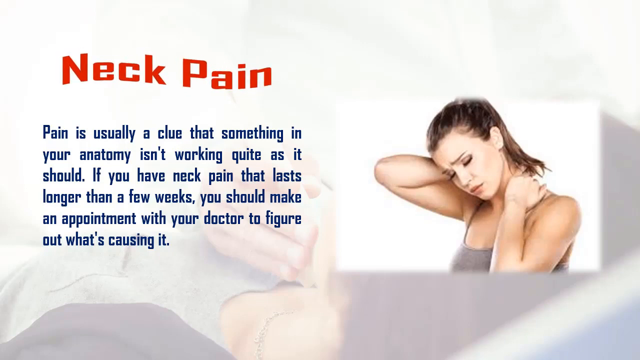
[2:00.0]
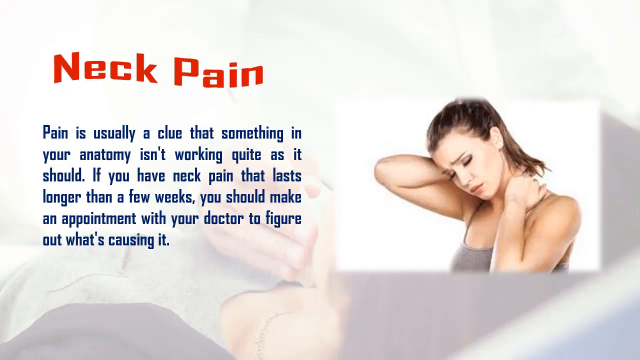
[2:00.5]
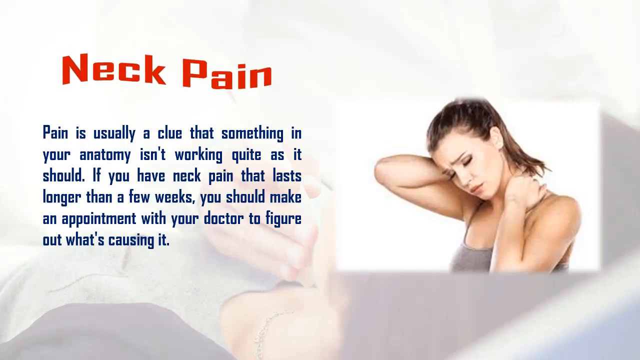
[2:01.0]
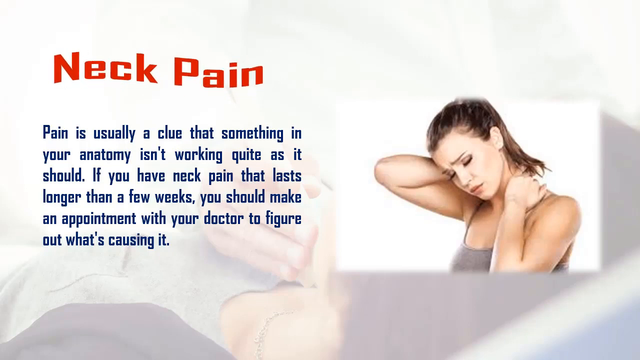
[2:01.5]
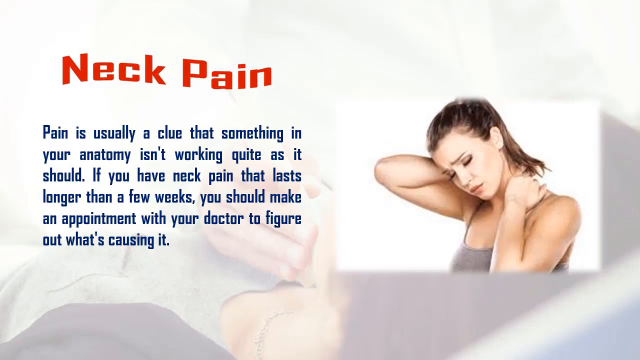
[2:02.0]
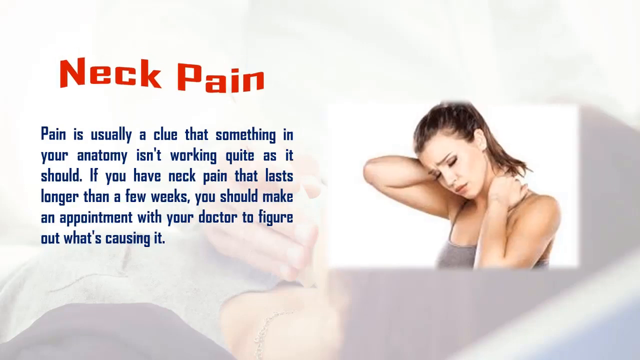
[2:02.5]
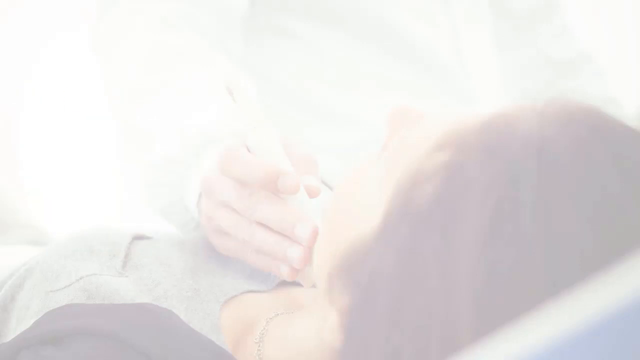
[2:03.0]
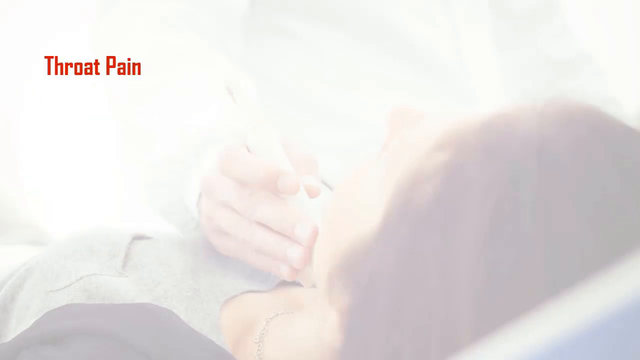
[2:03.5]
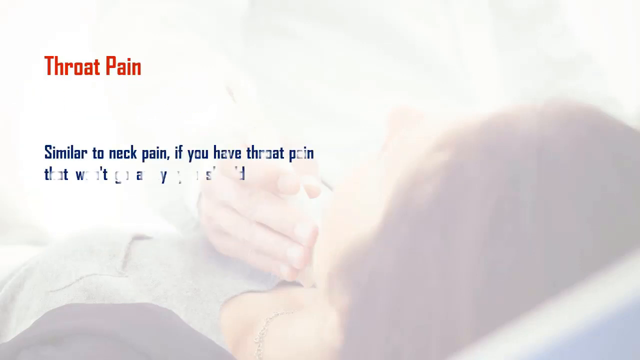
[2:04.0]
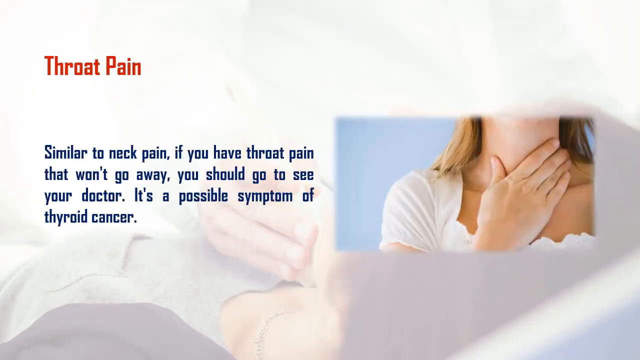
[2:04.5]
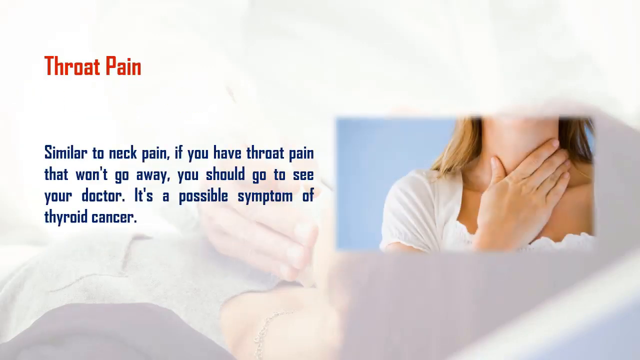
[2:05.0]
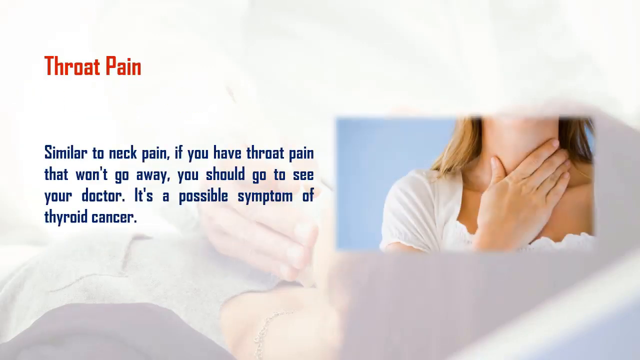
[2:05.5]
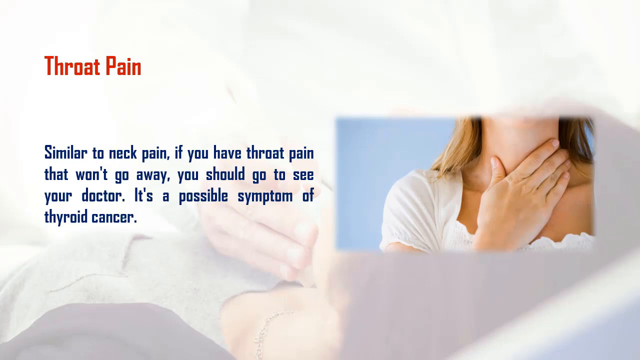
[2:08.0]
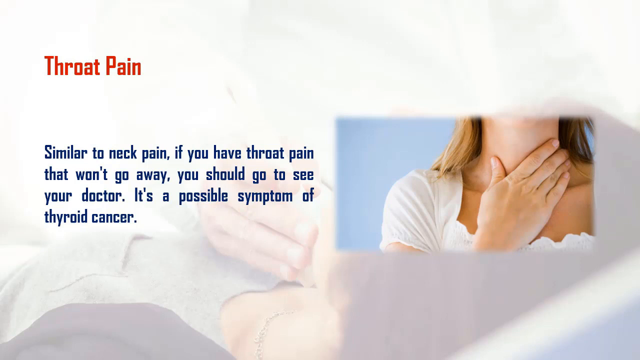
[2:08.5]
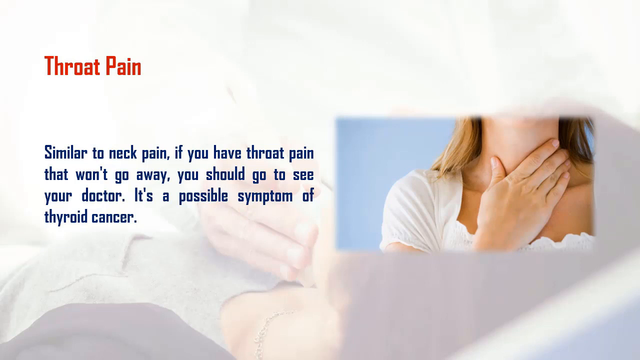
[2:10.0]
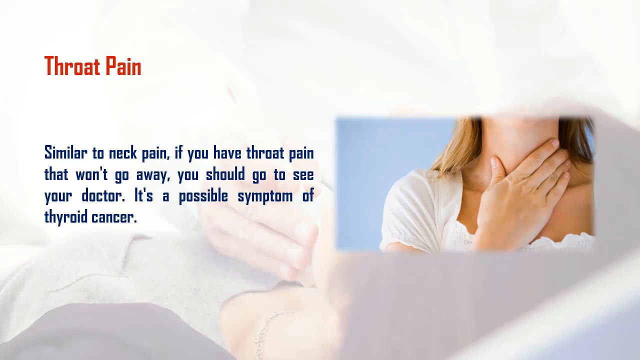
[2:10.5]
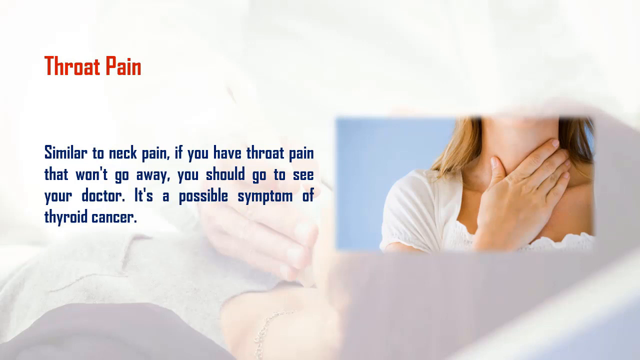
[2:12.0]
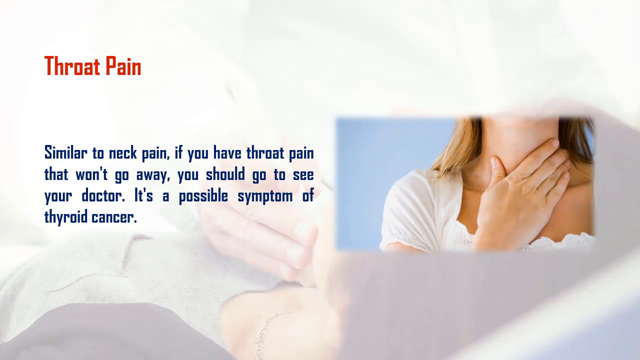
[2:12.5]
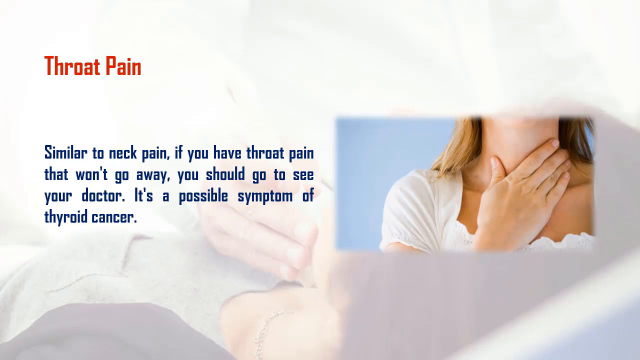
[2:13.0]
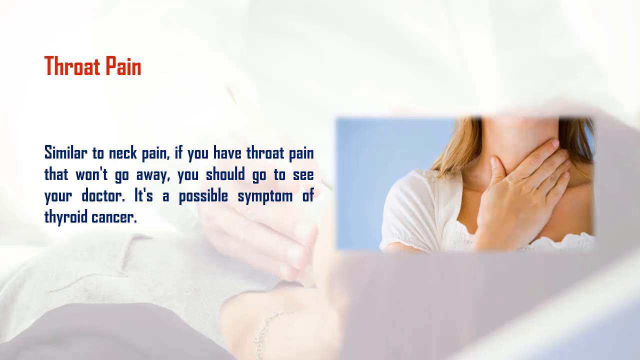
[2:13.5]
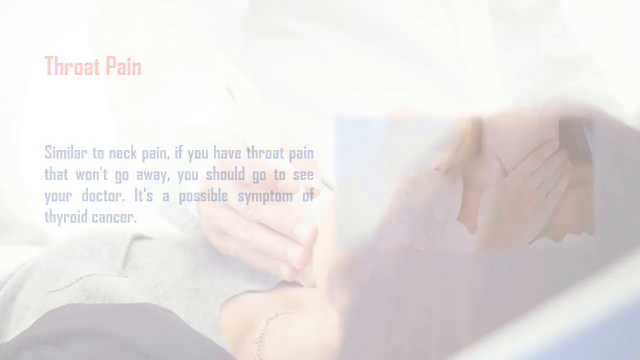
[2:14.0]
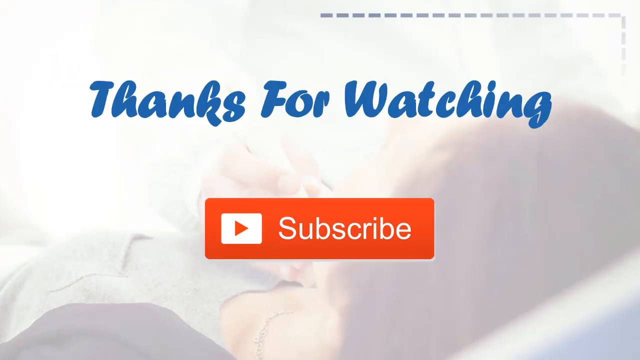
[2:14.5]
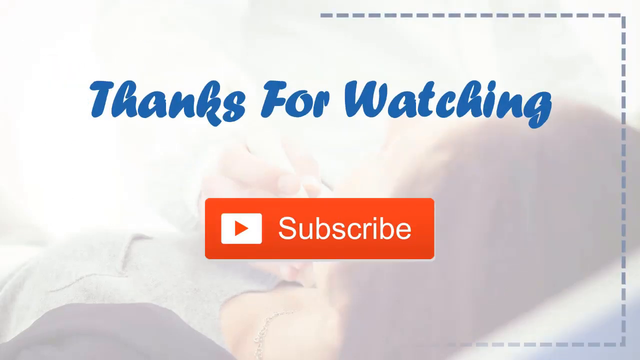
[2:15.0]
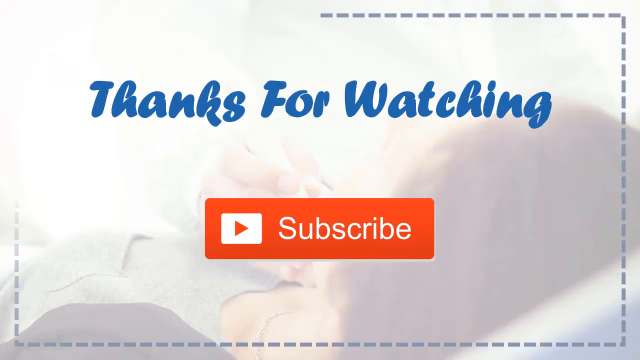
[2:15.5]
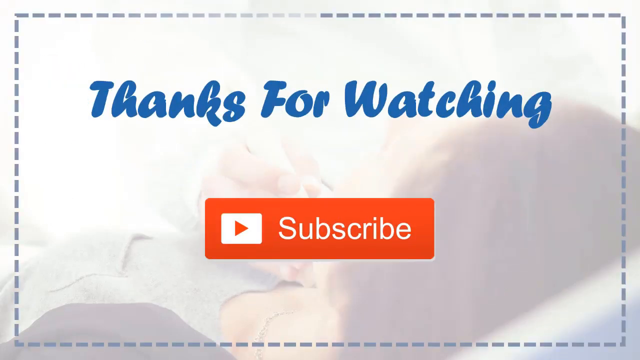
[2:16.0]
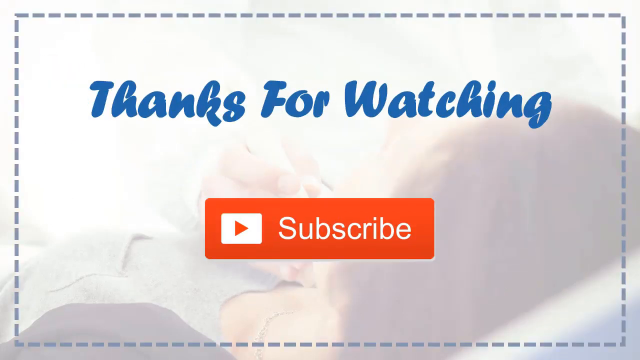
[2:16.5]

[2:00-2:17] The medical video, called Disease Facts, is about thyroid cancer. It shows "neck pain" in red font, followed in blue font by: "pain is usually a clue that something in your anatomy isn't working quite as it should. If you have neck pain that lasts longer than a few weeks, you should make an appointment with your doctor to figure out what's causing it." A woman on the right holds the back of her neck and looks pretty miserable; her right arm is kind of up and her left arm is kind of down, bent at the elbow. The next slide says "throat pain" in red, then in blue: "similar to neck pain, if you have throat pain that won't go away, you should go to your doctor. It's a possible symptom of thyroid cancer." These words are on the left of the slide, on top of the very faint picture, seen on most of the slides, of the lady lying down and touching her neck with her right hand. On the right-hand side is a white lady with blondish, golden hair wearing a white cap-sleeve shirt with a kind of ruffled V or square neckline; she is touching her neck with her right hand.